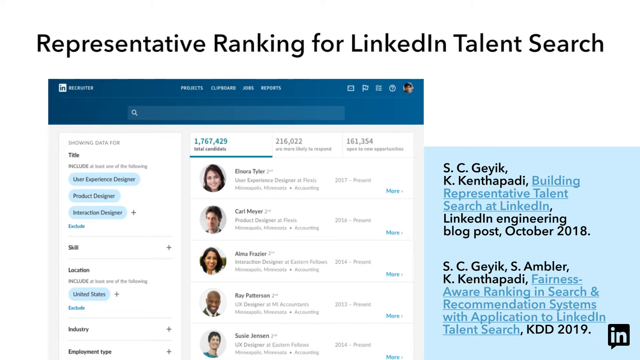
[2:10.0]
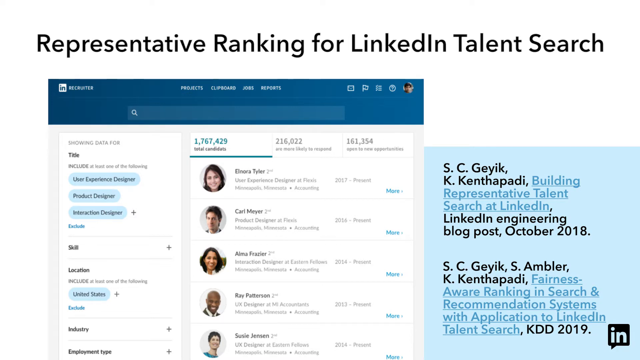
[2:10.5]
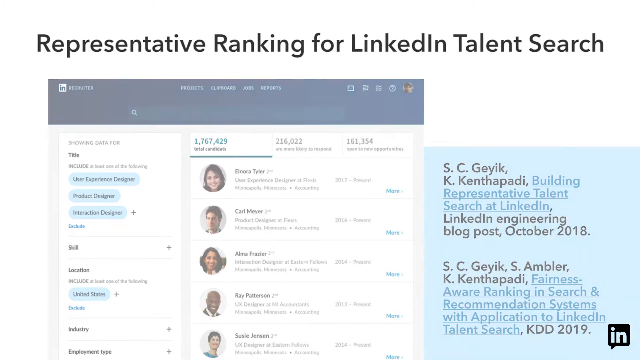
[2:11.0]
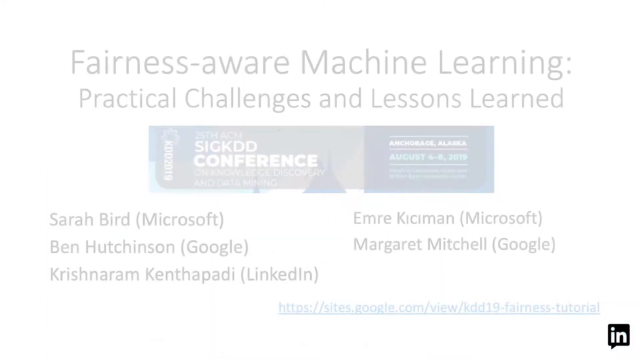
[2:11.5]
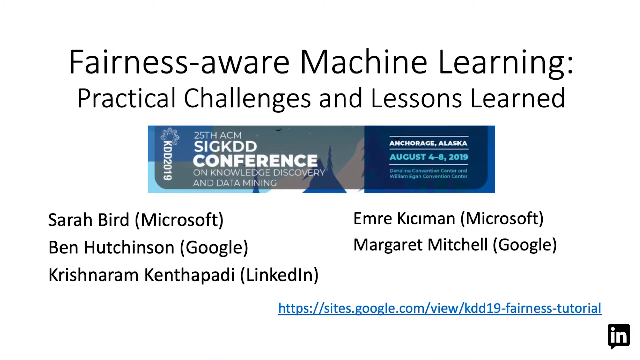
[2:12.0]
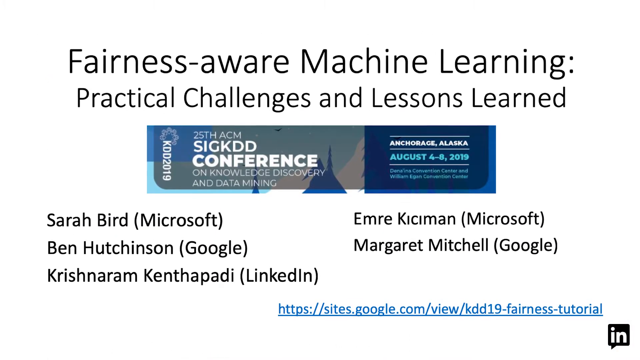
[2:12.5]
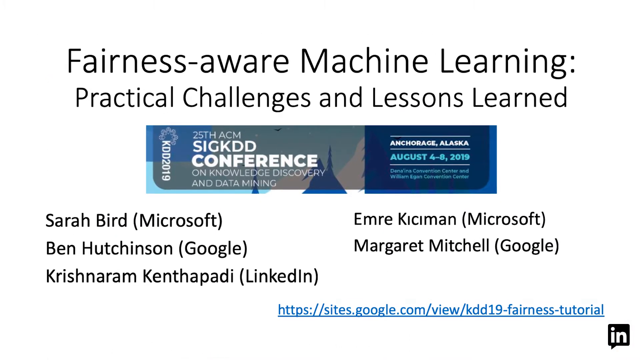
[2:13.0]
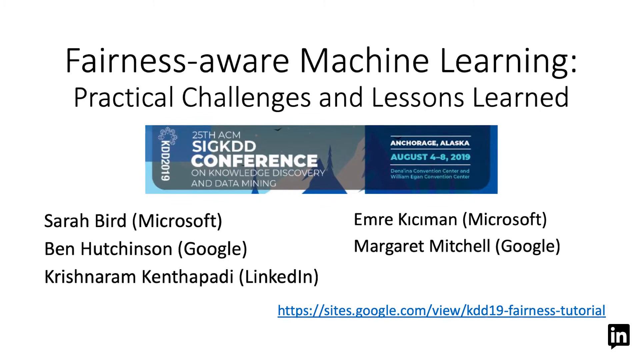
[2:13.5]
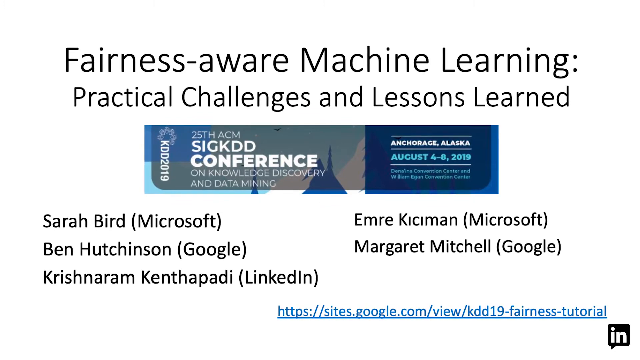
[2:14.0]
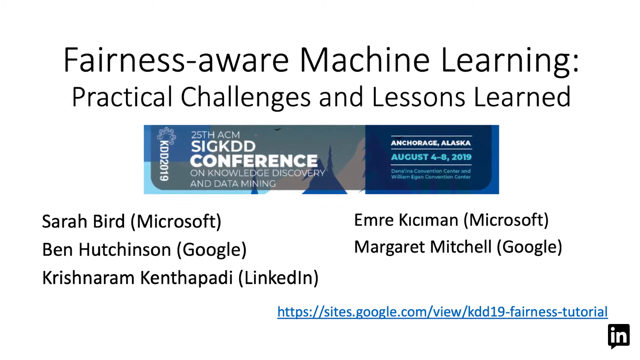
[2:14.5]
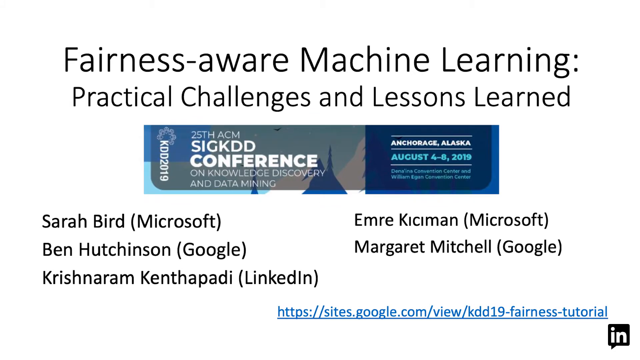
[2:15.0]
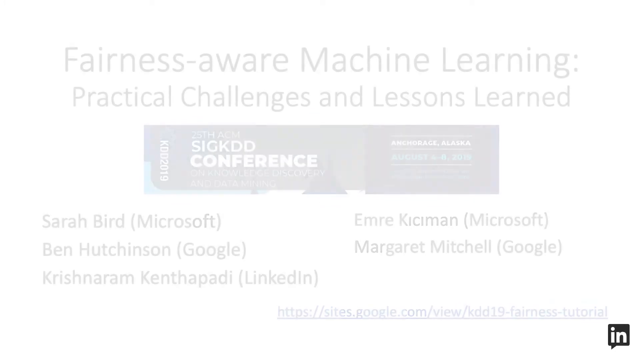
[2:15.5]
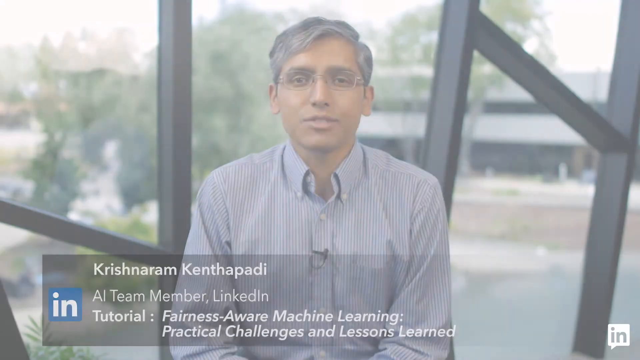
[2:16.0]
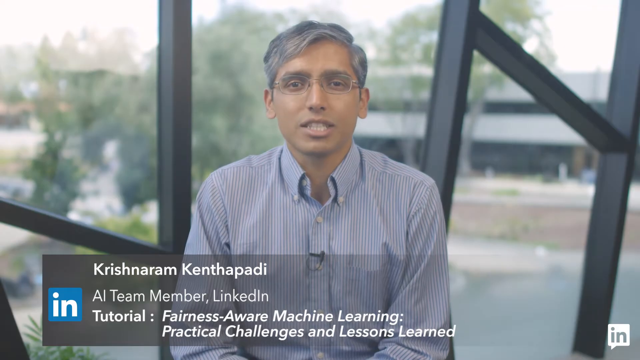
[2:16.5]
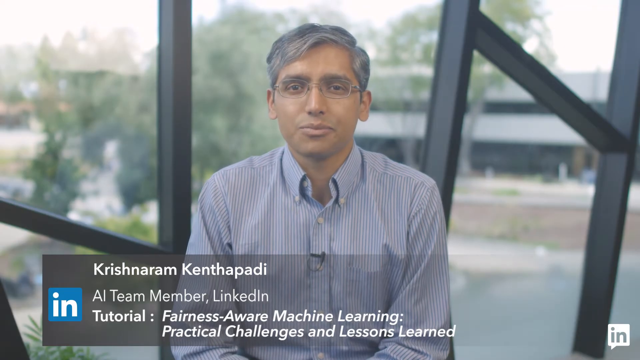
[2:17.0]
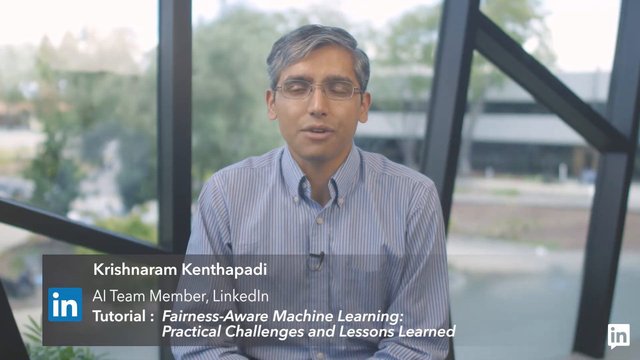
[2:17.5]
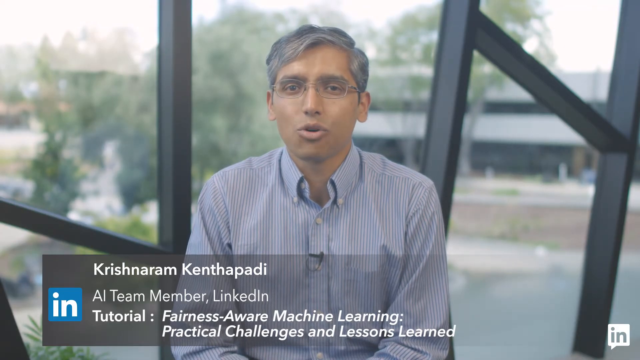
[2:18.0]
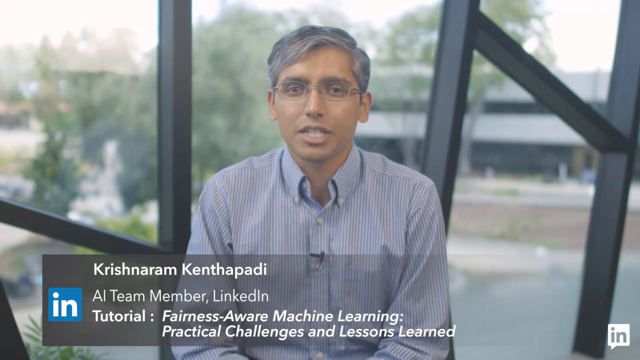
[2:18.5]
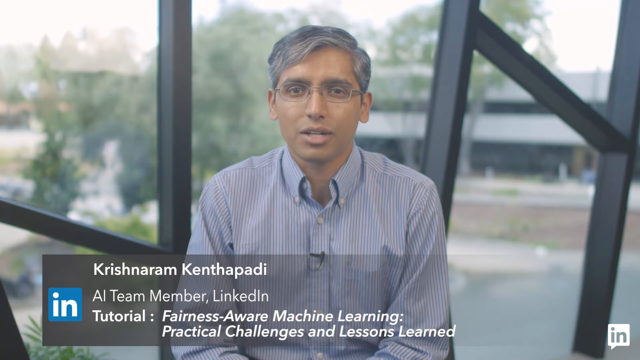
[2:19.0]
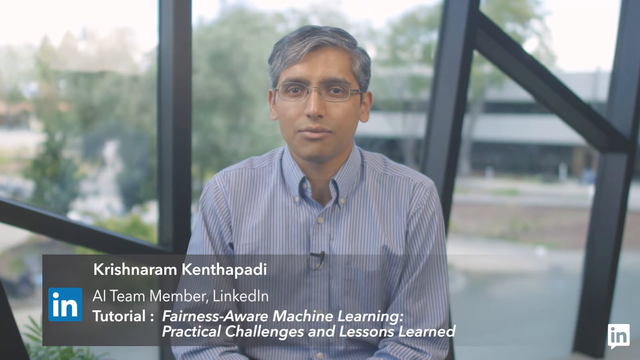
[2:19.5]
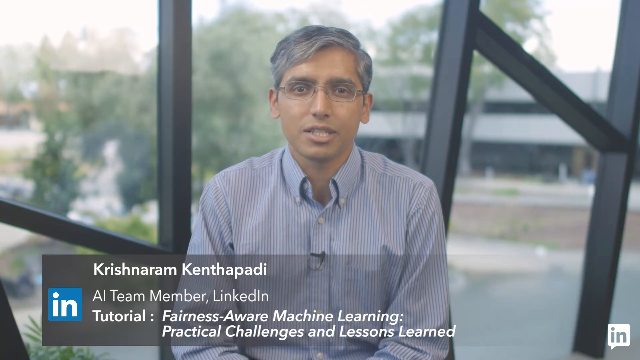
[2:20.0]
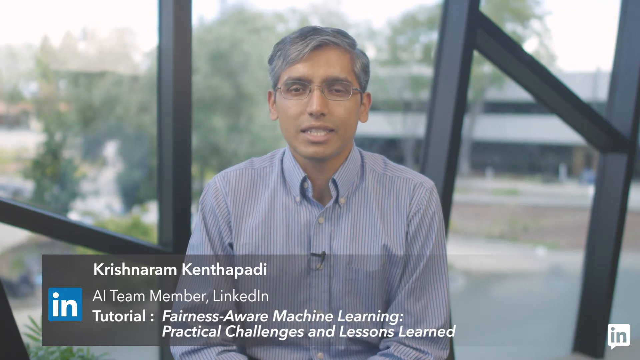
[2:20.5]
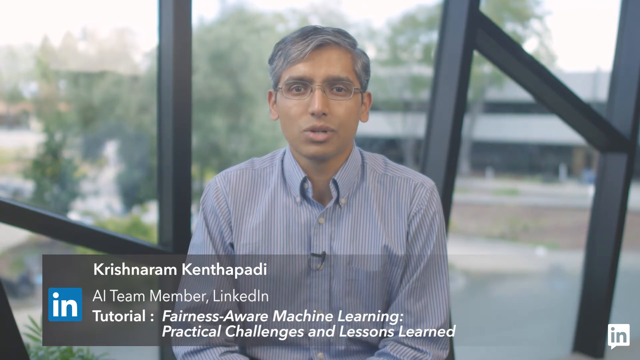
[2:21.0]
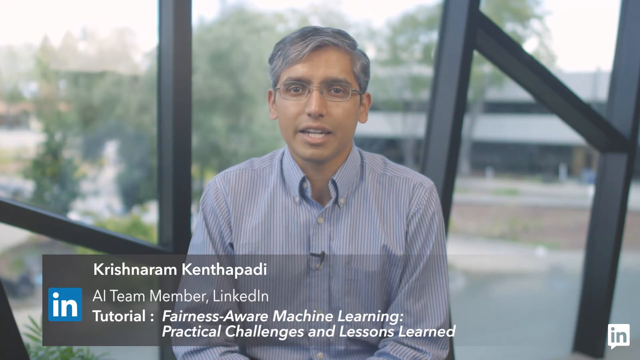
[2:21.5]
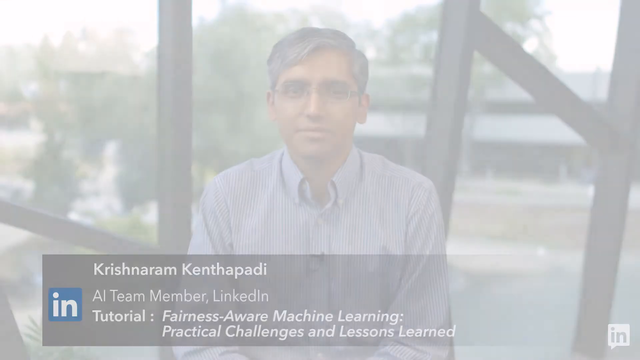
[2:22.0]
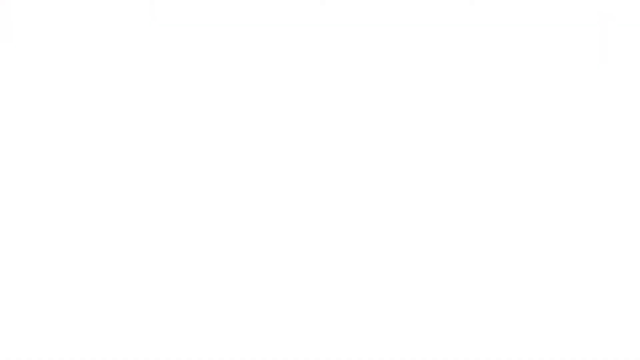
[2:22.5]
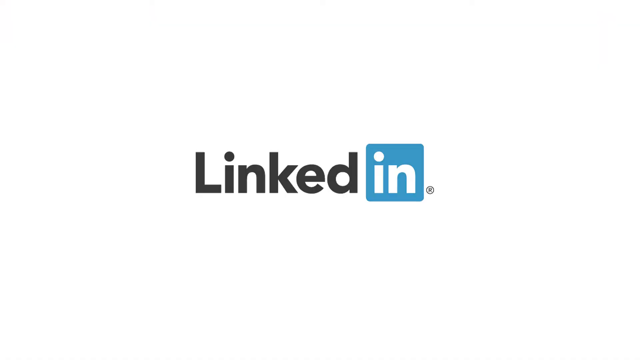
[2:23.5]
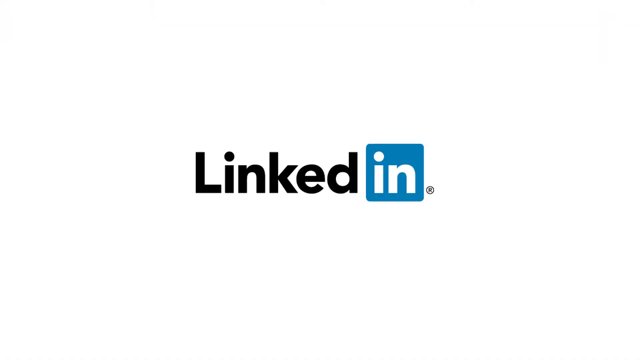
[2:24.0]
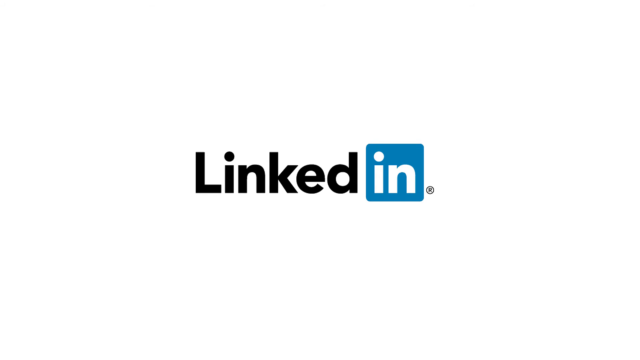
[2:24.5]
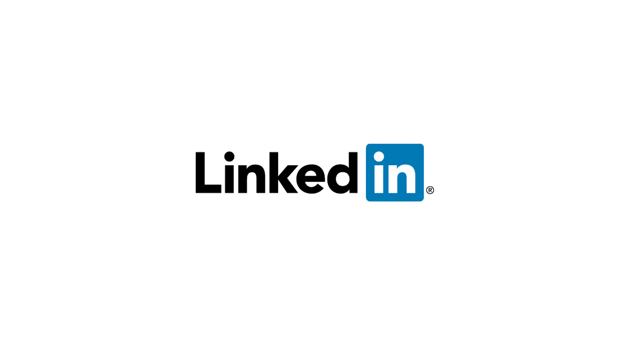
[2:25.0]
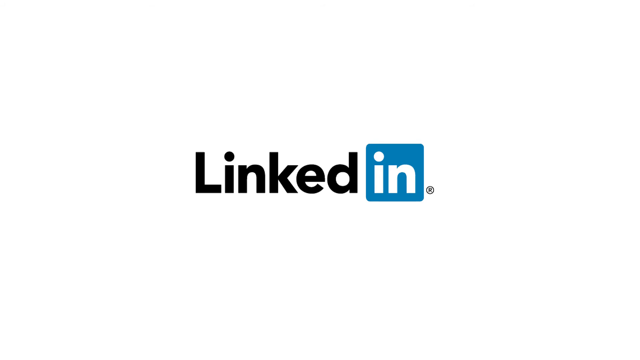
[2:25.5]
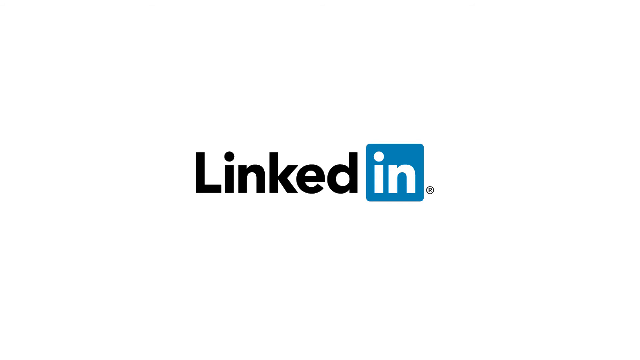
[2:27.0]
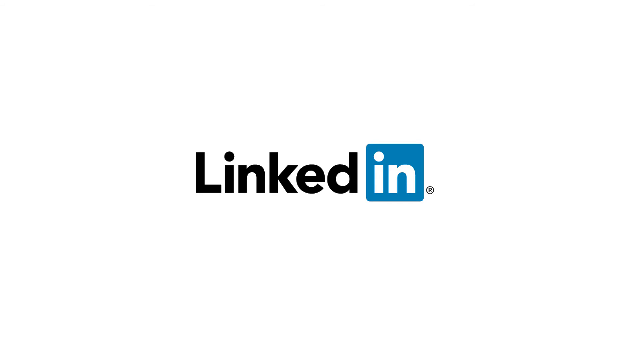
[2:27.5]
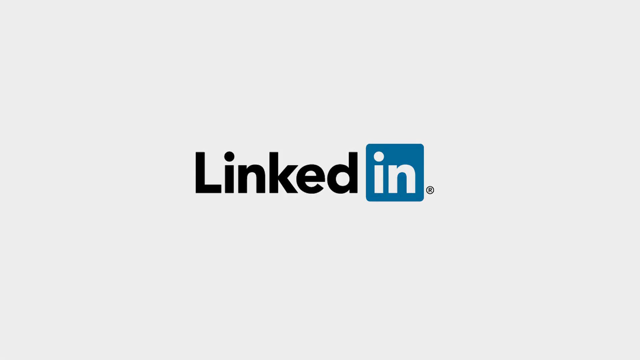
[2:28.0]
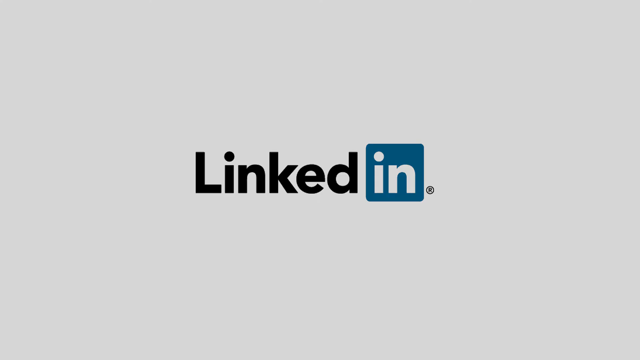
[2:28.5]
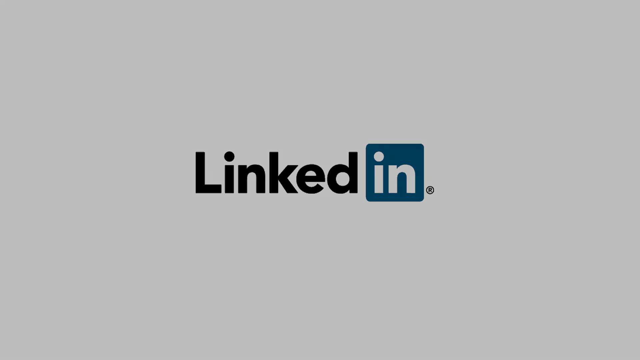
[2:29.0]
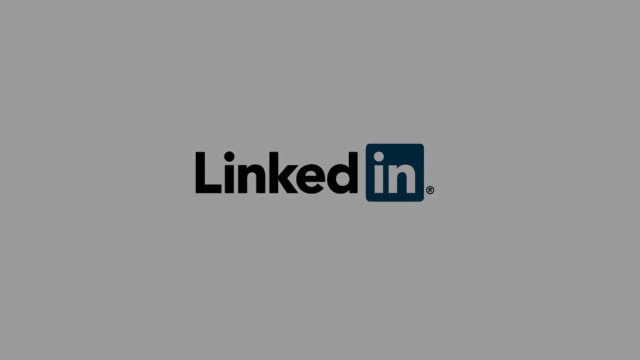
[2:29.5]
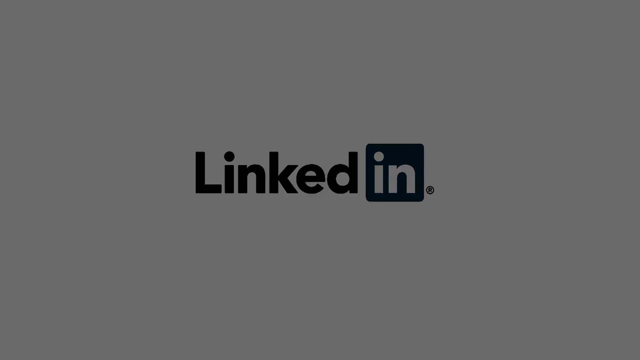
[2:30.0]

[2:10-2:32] A slide reads "fairness aware machine learning: practical challenges and lessons learned". It has a small banner for a conference, the 25th ACM SIGKDD Conference on Knowledge Discovery and Data Mining, in Anchorage, Alaska, on August 4th to 8th, 2019. Below it are names of people who might be speaking at the conference: Sarah Bird from Microsoft, Ben Hutchinson from Google, Karishnarim Kantharapati from LinkedIn, Emery Kissiman from Microsoft, and Margaret Mitchell from Google. A link to a Google result is at the bottom. The video then fades back to the interview-style shot of Karishnarim Kantharapati facing the camera, wearing glasses and a button-down shirt. It then fades into the LinkedIn image, and the final scene is the LinkedIn logo on a white background, which fades to black.